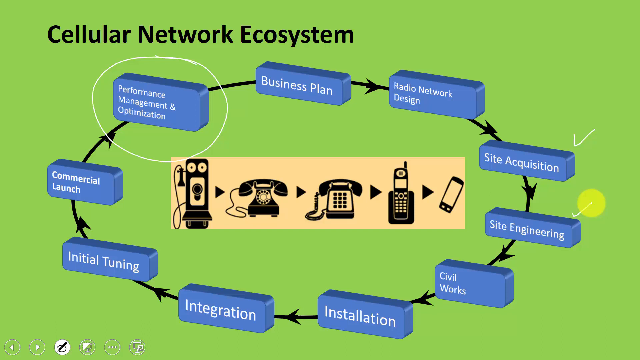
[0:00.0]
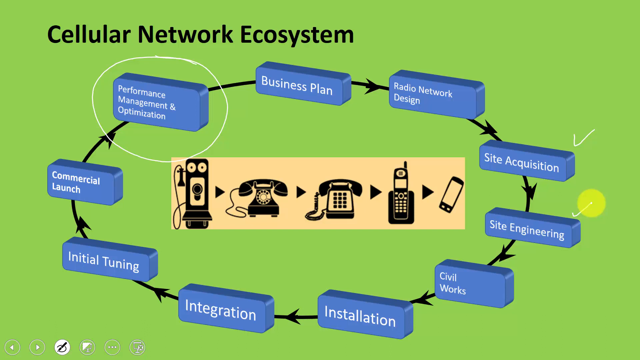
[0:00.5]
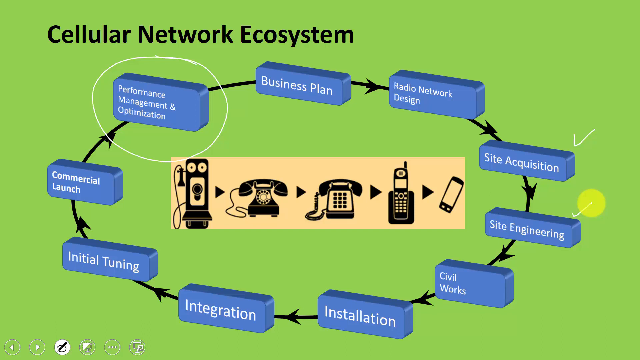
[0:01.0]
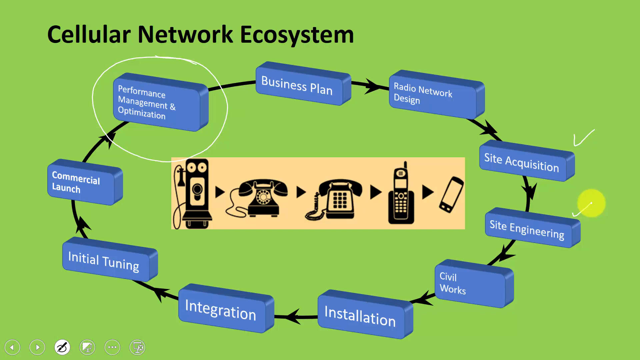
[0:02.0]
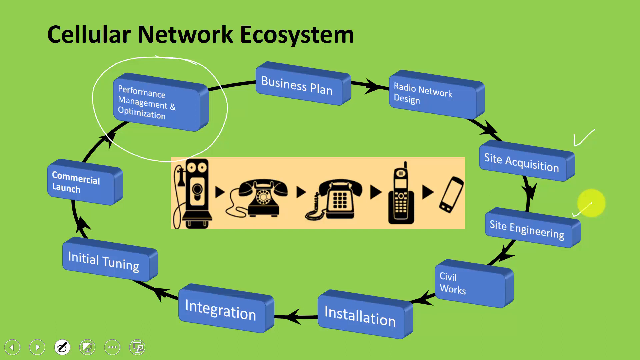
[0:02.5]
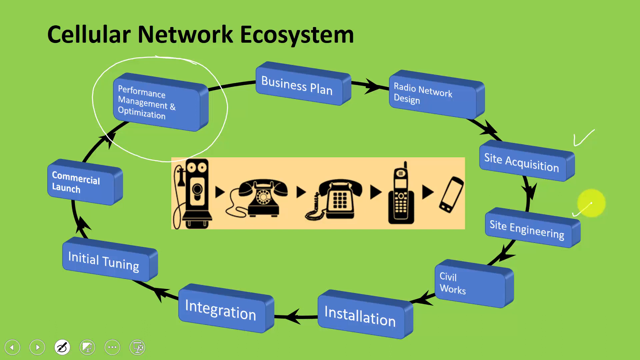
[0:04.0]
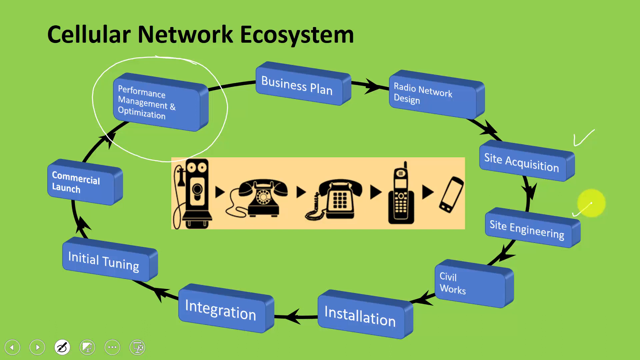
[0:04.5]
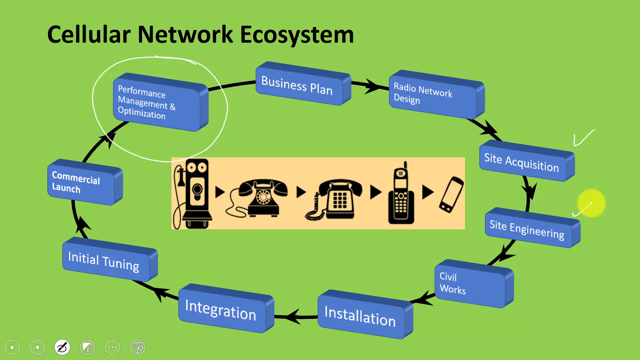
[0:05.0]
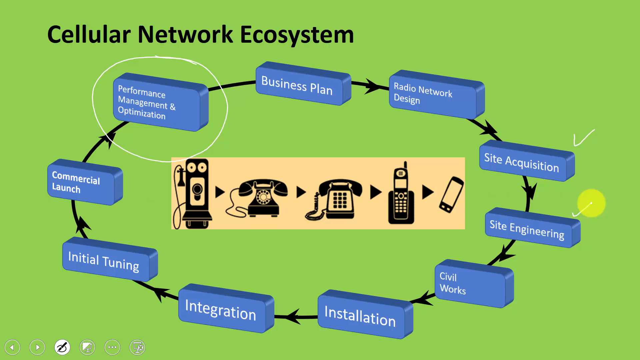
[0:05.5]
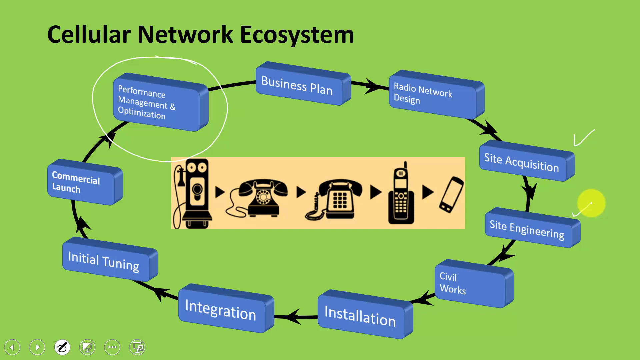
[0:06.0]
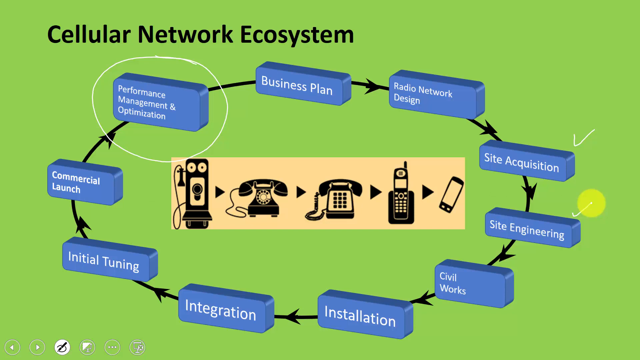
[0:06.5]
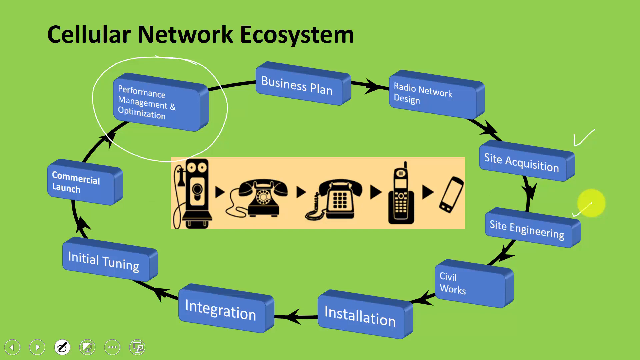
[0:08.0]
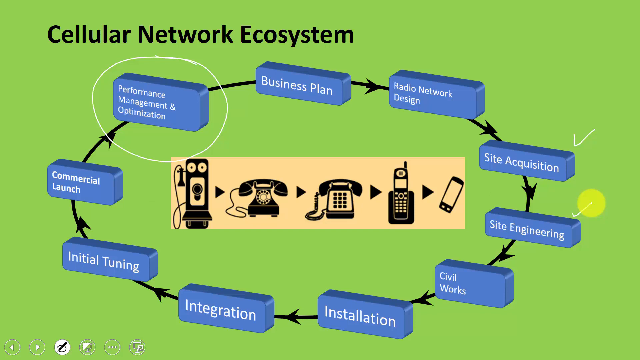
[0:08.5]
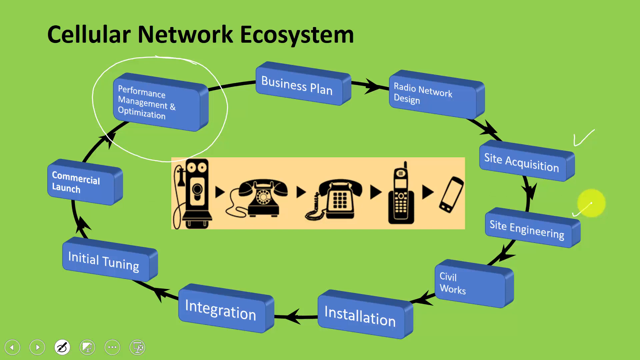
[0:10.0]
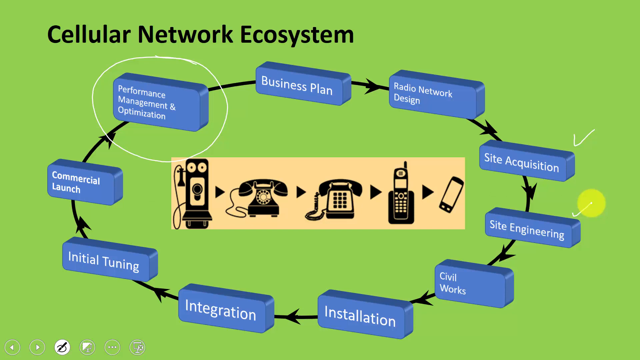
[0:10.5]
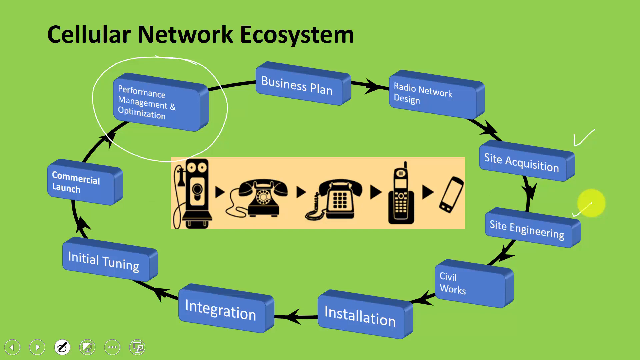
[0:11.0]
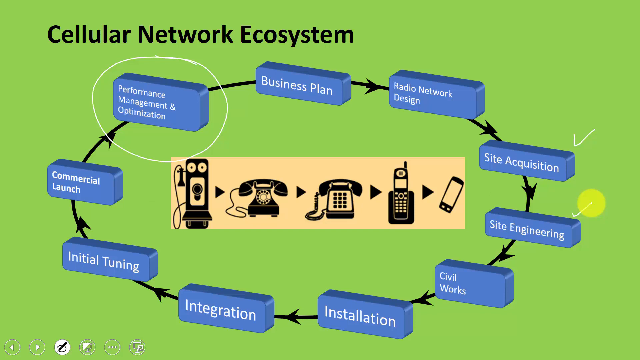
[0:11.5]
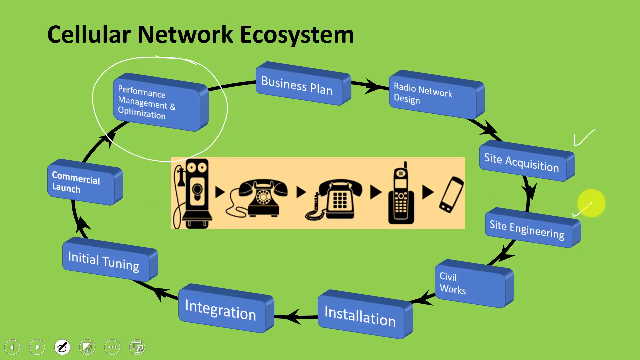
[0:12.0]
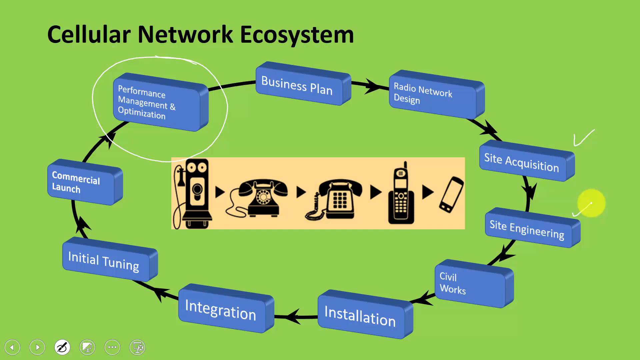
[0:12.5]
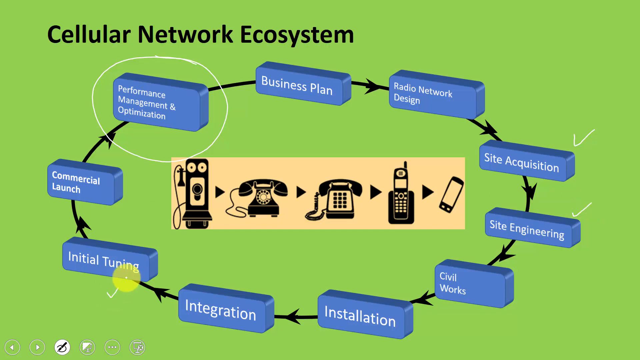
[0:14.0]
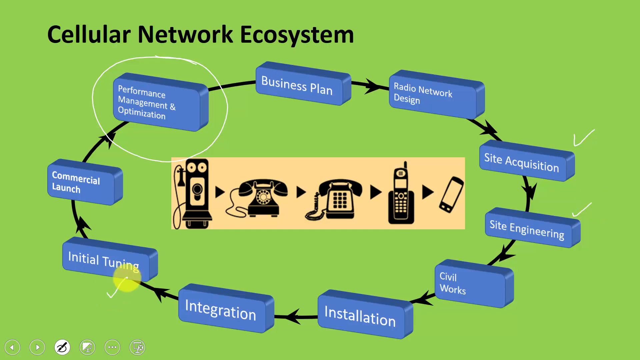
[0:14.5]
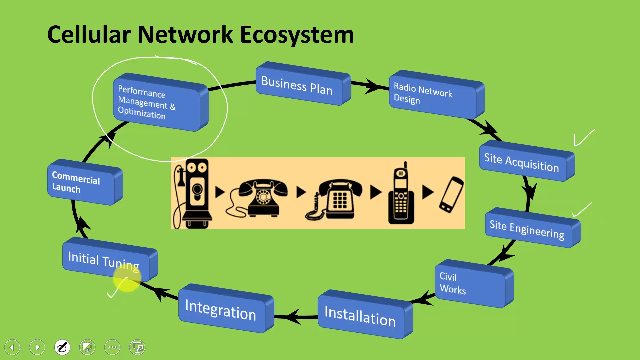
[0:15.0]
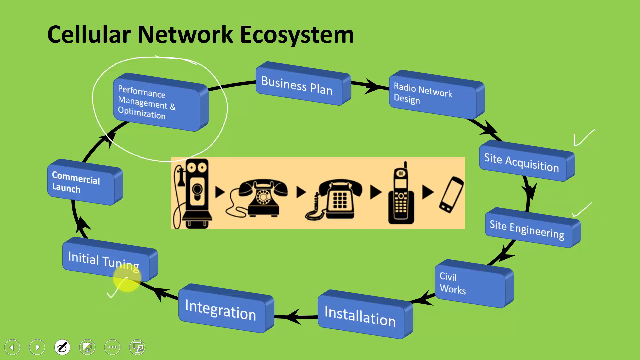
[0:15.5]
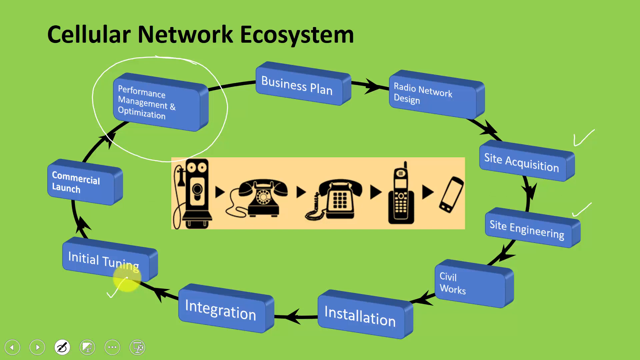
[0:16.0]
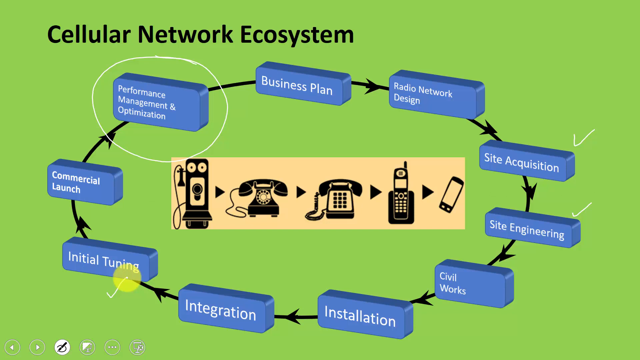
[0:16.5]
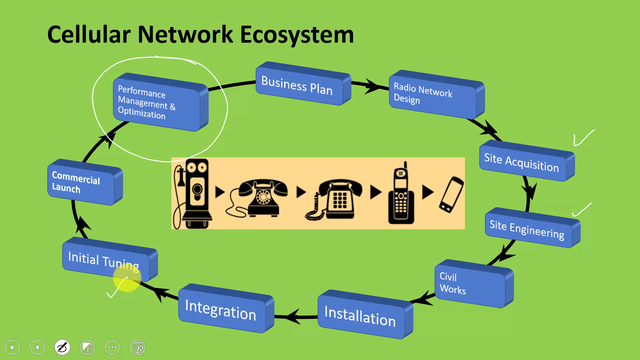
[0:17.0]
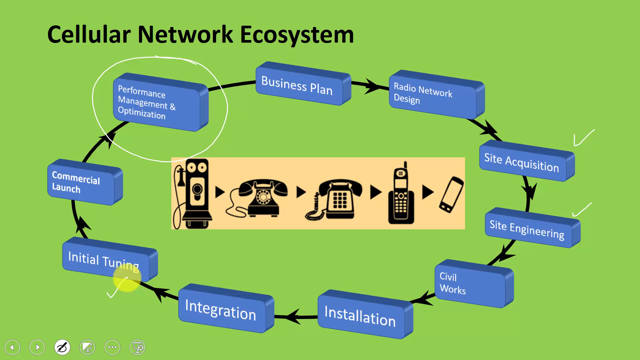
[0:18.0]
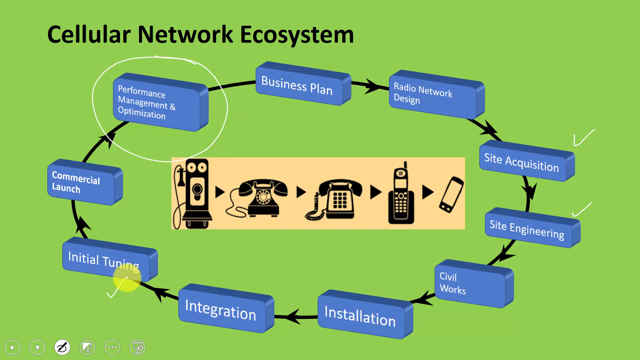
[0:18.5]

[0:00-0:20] A green background carries the title "cellular networks ecosystem" in black lettering. Below it is a one-directional flowchart arranged in a circle, with each step in a blue block. The performance management and optimization block is circled in yellow. The steps run from performance management and optimization to business plan, radio network design, site acquisition (which is checked), site engineering (also checked), civil works, installation, integration, initial tuning and commercial launch. Behind the site engineering checkmark is a circle in a lighter green than the rest of the slide, possibly the cursor. At one point this lighter green circle moves to initial tuning, which then gets a white checkmark. Inside the ring is a yellow sub-background showing the evolution of the telephone: a very old-fashioned phone with two bells, apparently a 1920s phone, a 1950s/60s phone, a cellular handset and a cell phone.